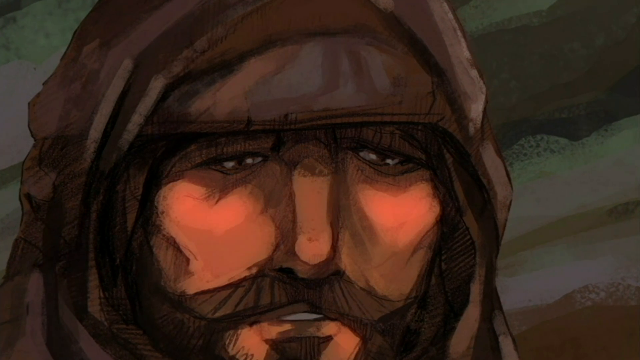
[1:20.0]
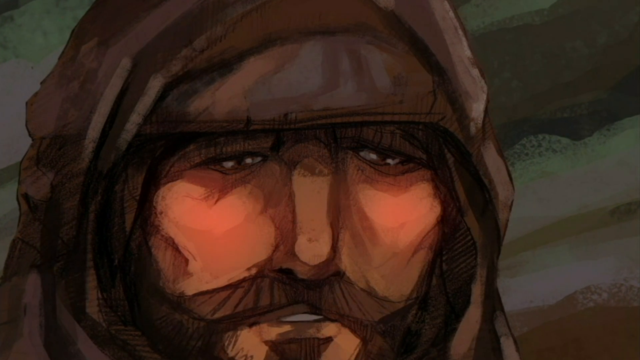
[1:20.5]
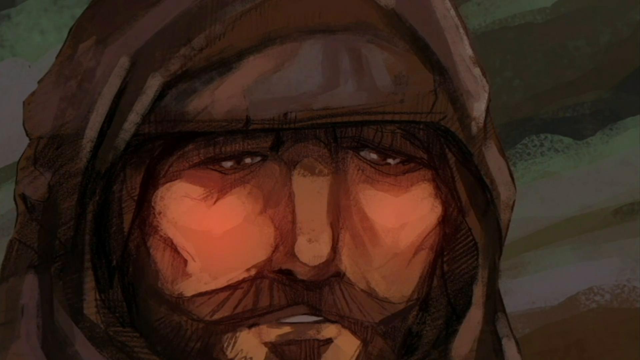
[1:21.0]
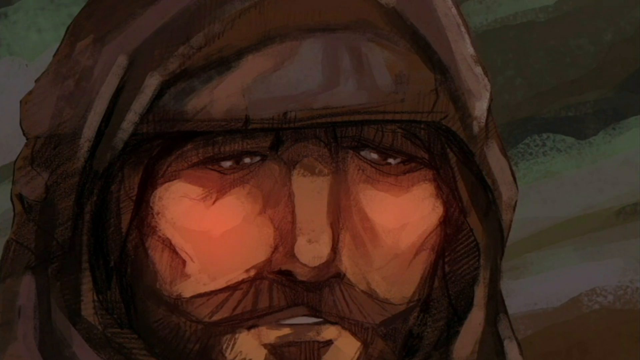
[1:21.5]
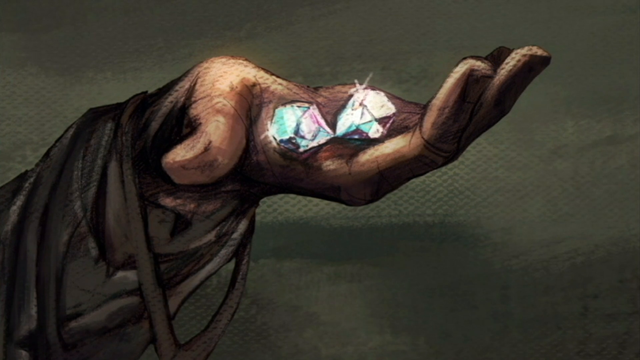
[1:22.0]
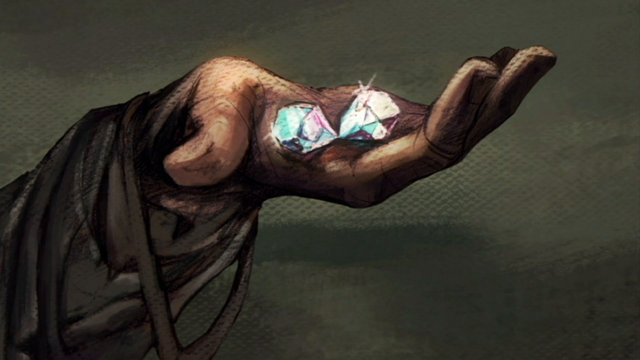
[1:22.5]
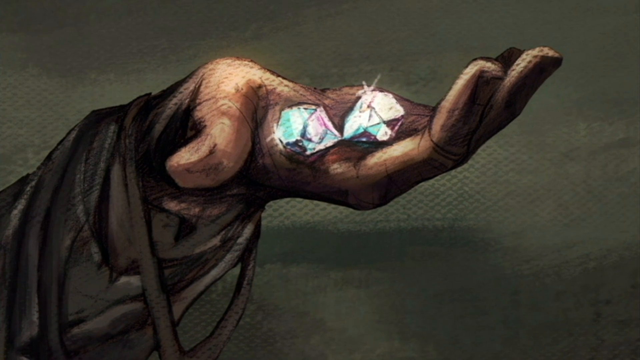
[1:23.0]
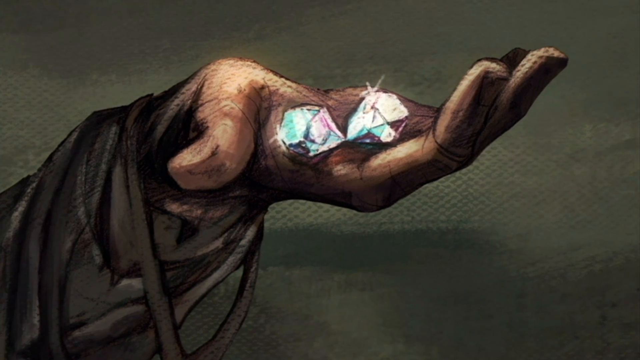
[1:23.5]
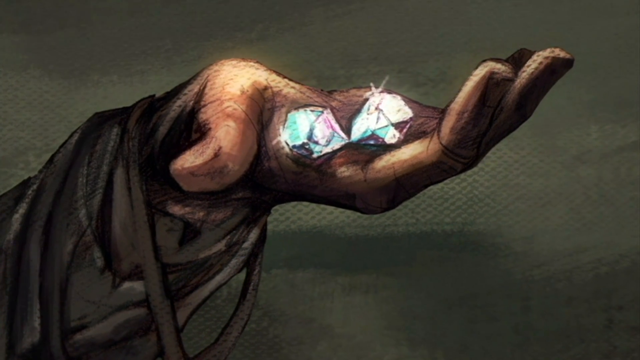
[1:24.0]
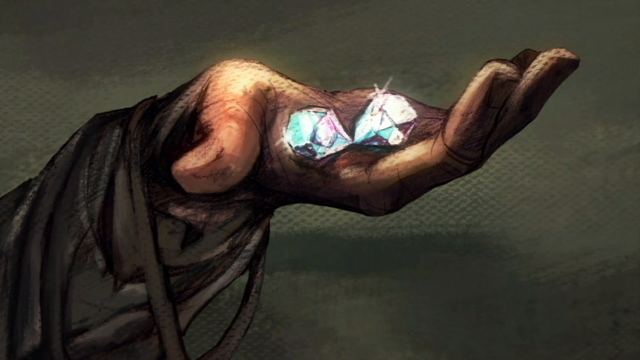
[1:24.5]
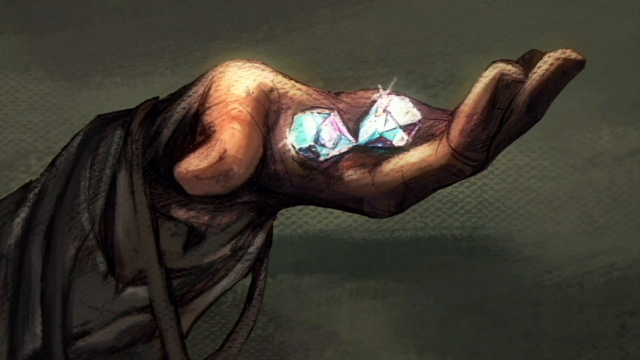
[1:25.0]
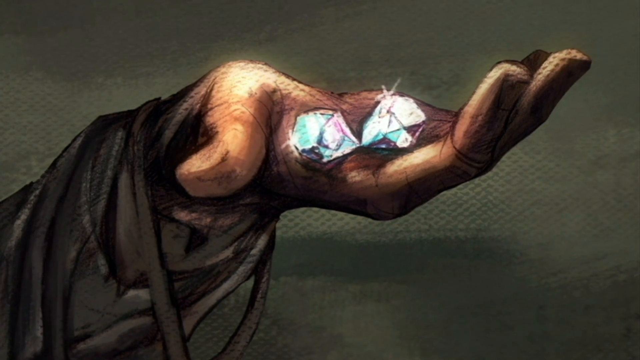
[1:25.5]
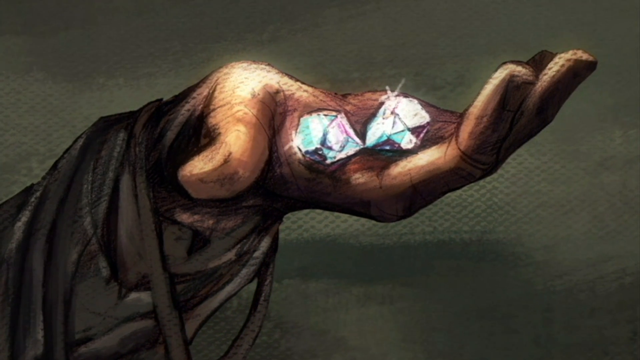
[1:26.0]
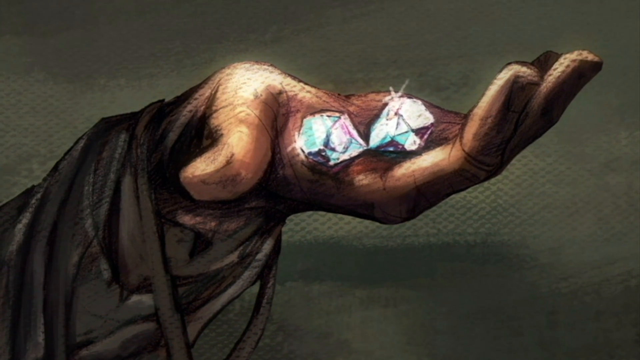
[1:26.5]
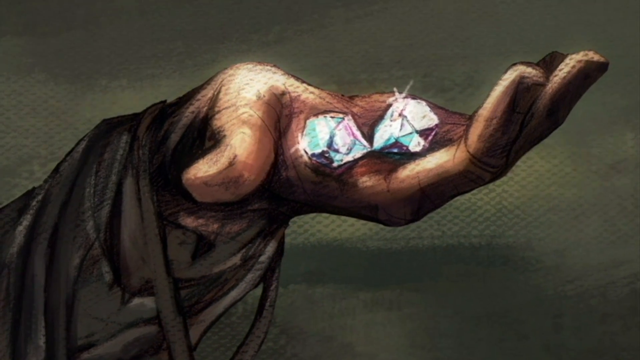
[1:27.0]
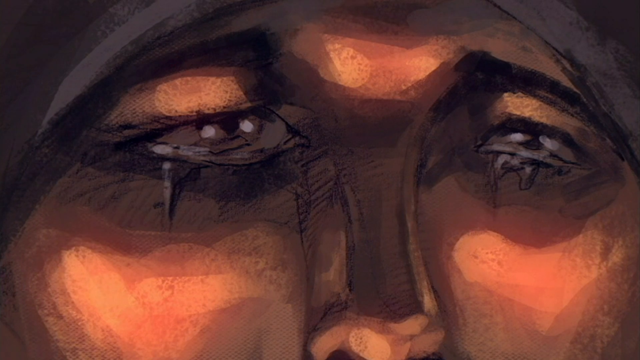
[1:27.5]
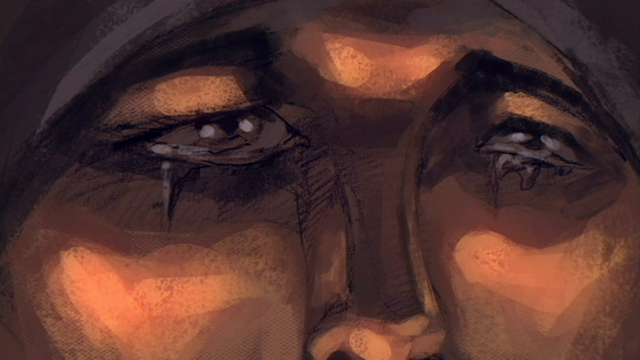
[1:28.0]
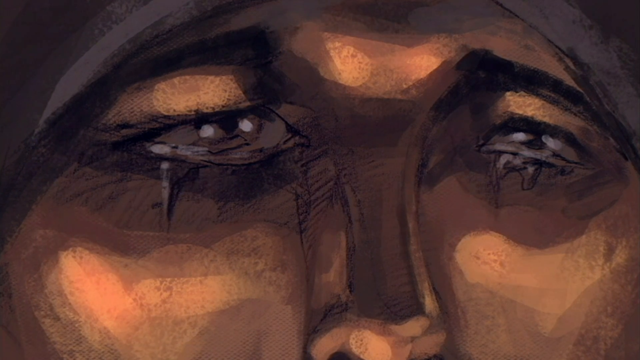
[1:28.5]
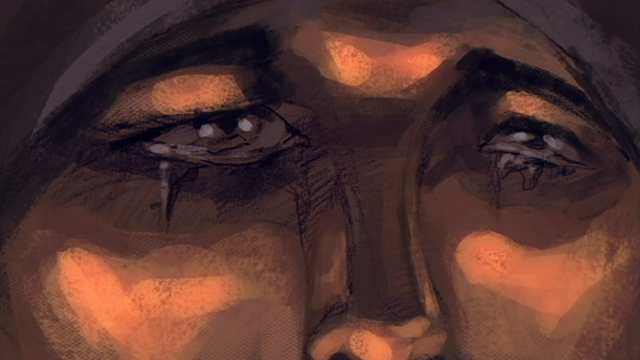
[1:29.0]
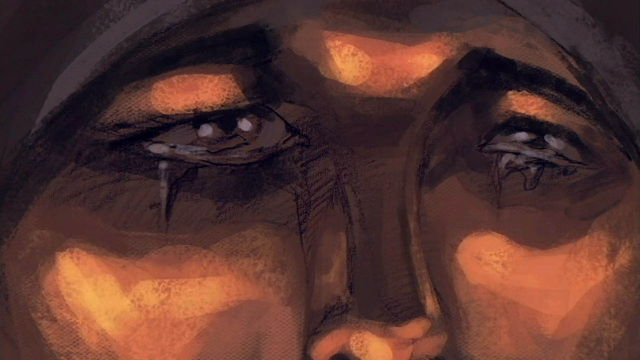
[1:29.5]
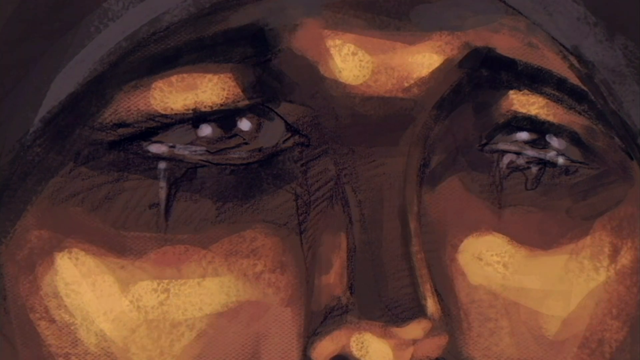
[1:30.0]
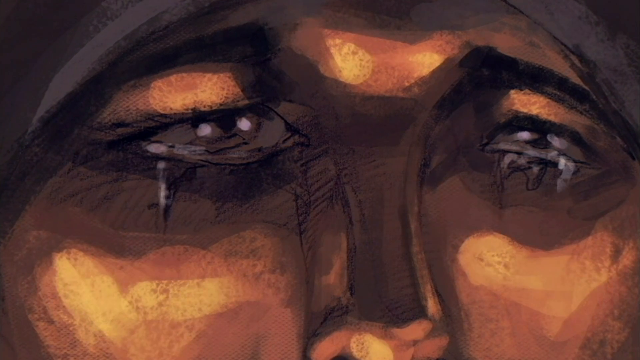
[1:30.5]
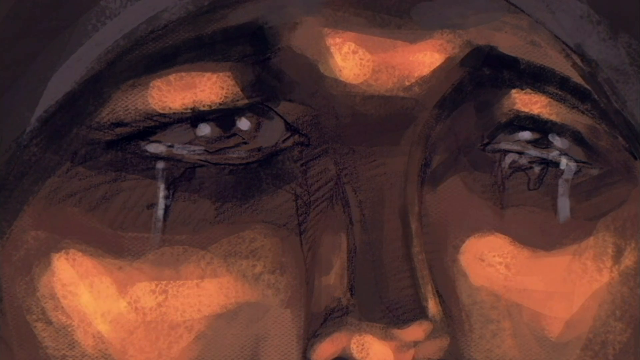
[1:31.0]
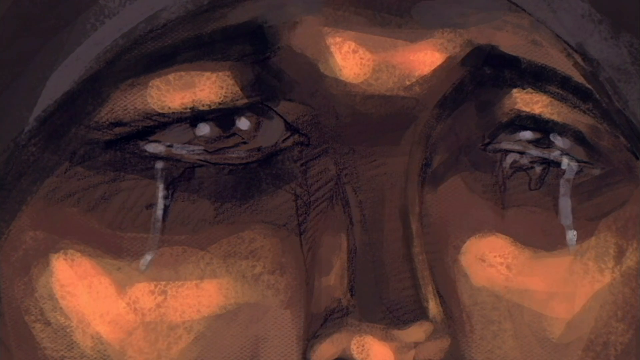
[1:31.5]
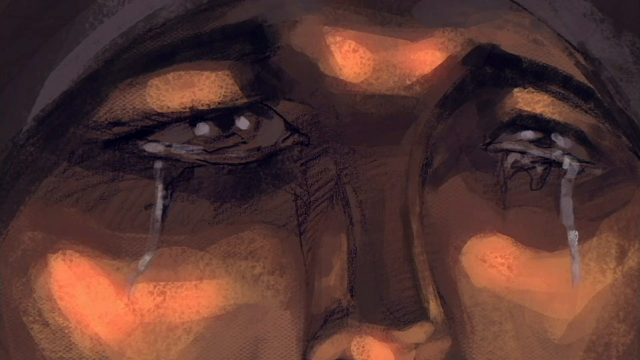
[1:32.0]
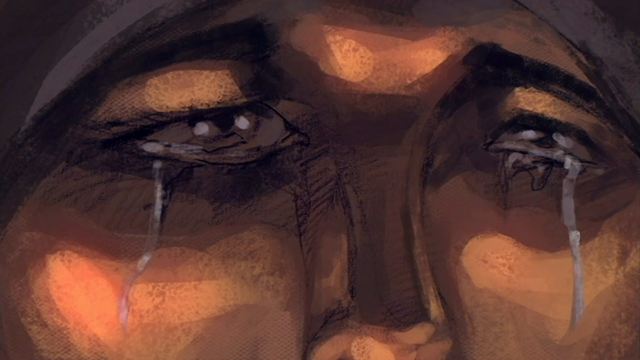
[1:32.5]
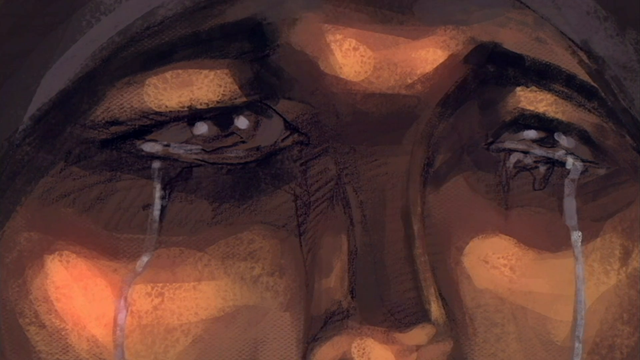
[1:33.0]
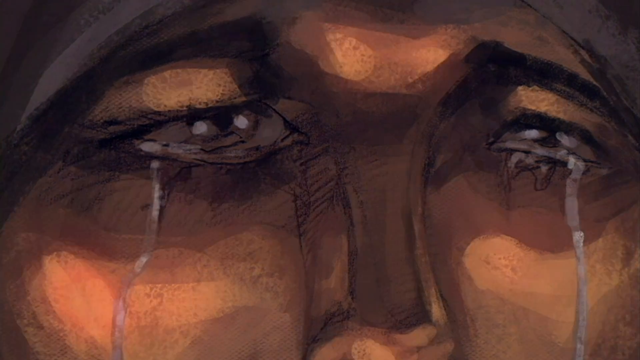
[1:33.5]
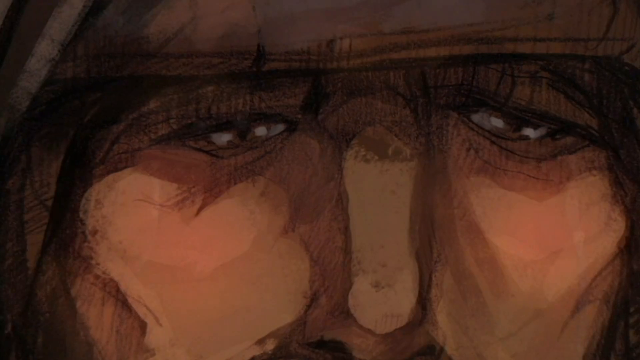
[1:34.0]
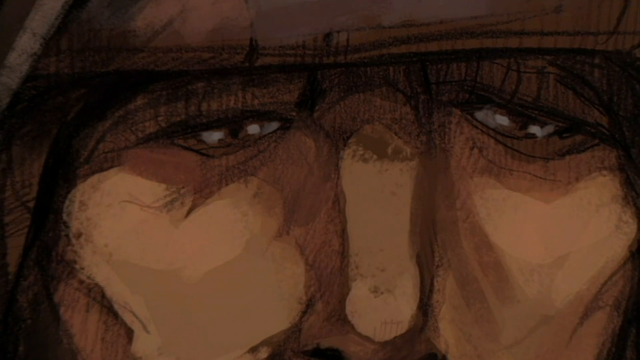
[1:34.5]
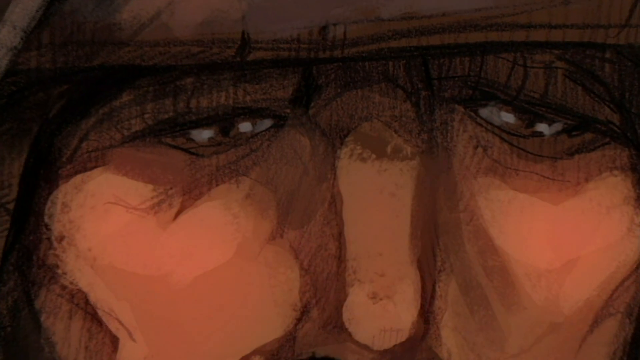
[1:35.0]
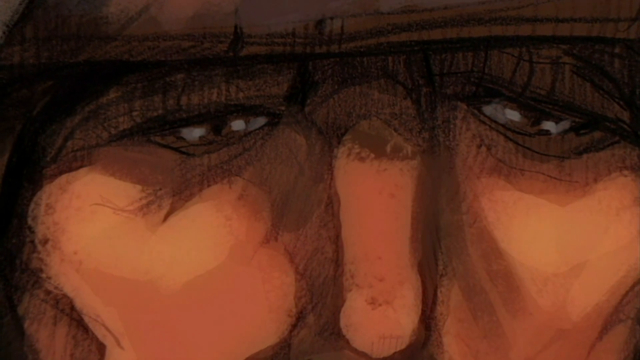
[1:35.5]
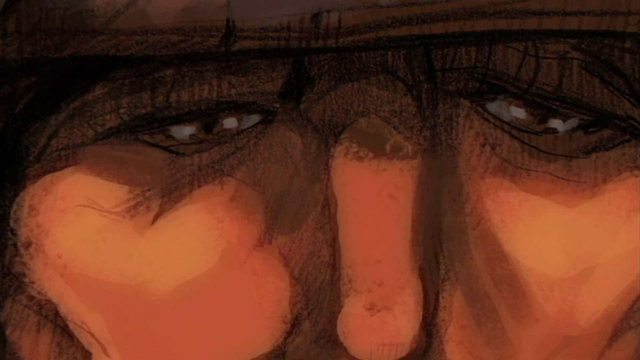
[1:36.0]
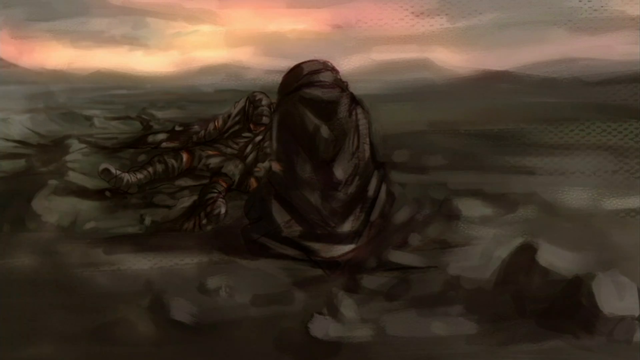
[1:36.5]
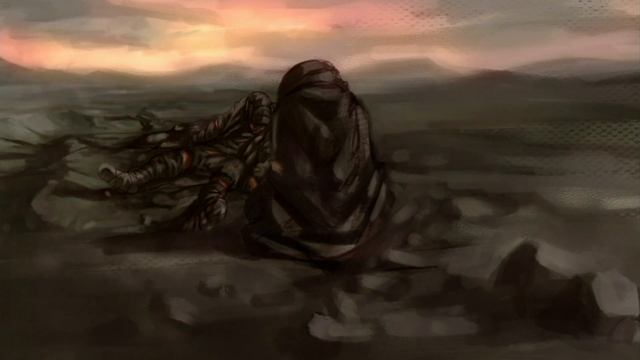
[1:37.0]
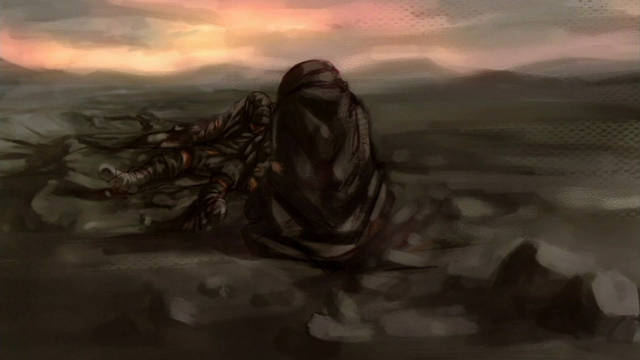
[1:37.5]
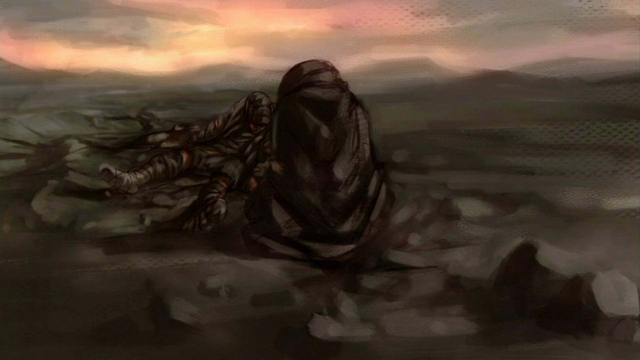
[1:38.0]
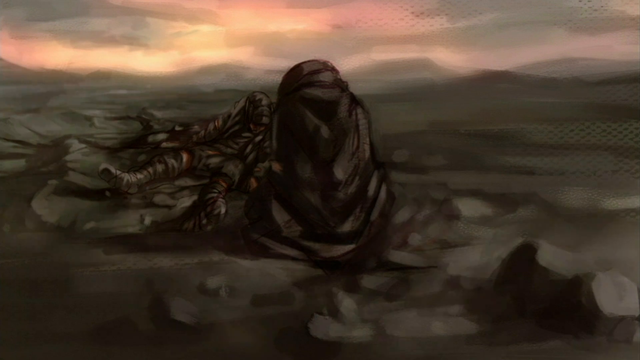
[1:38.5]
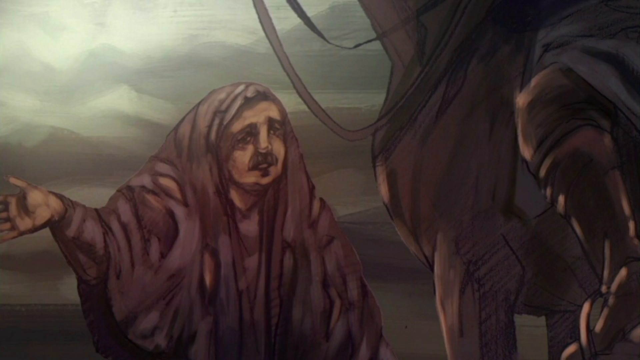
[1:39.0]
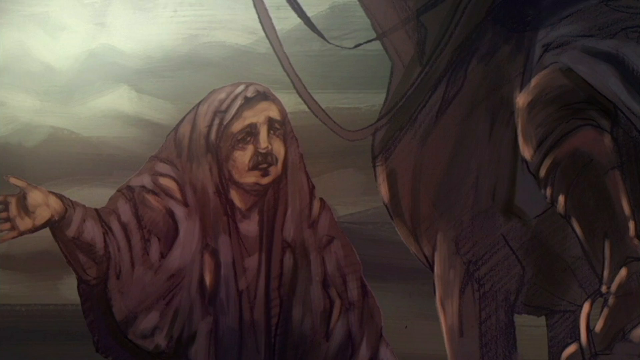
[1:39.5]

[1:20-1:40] Under the man's eyes there is almost a reddish tint, as if he is looking at a fire. Then there is a hand in the center, the arm going off the left side, fingers outstretched to the right and thumb toward the camera, holding two big sparkling white-silver diamonds. The view slowly zooms in to the left on a close-up of a person's nose and eyes, with tears just starting to come out, then a couple more tears run down their face. Next is a close-up of another person's nose and eyes, very worn, with a little of a wrap visible across the top; their eyes are partially closed and they look very tired and fearful. The view zooms in slowly. Then there is apparently a person's back in the middle with somebody lying in front of them, their leg visible coming off to the left; the person looks like they are sitting down in front of them, maybe trying to help. There is a yellowy-orange sky with some gray clouds, and what looks like a little fog moving past them. Then a person wearing a big red robe over their head faces toward a horse, of which only the front end is visible. The person's hand is stretched out to the left, and they have a mustache.